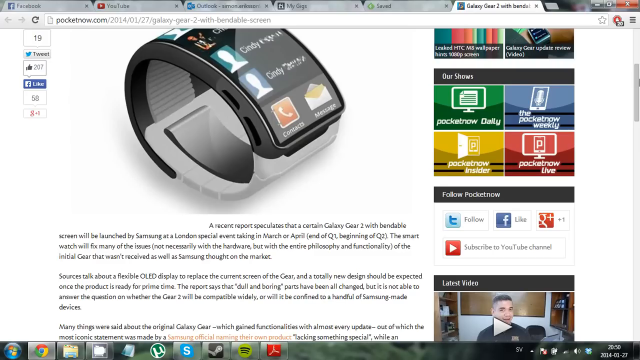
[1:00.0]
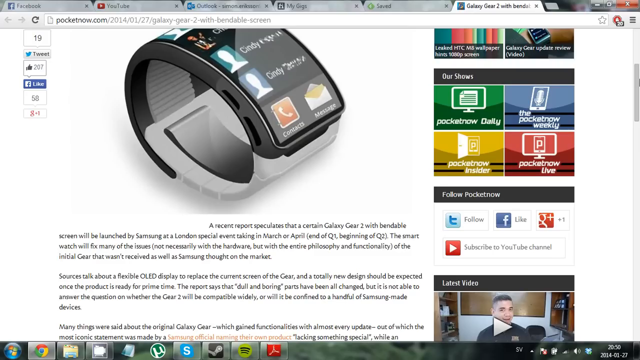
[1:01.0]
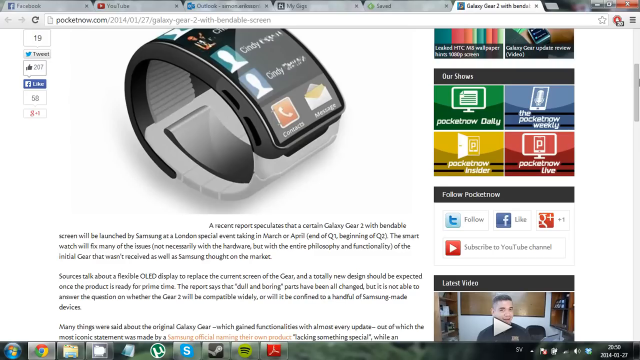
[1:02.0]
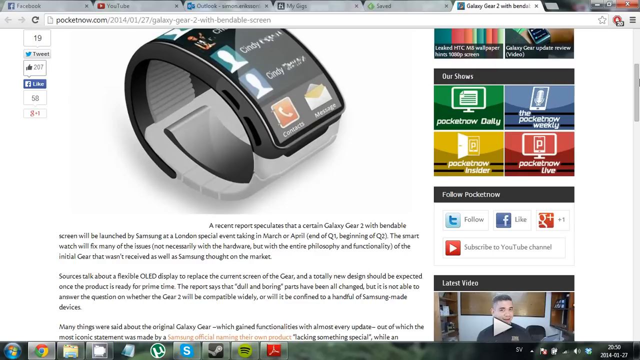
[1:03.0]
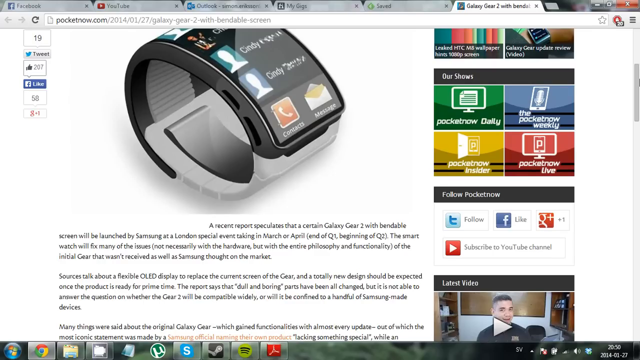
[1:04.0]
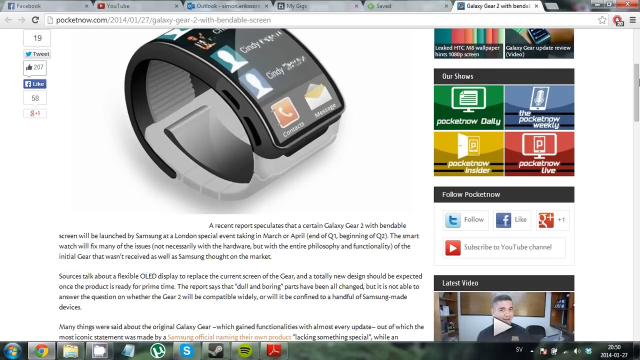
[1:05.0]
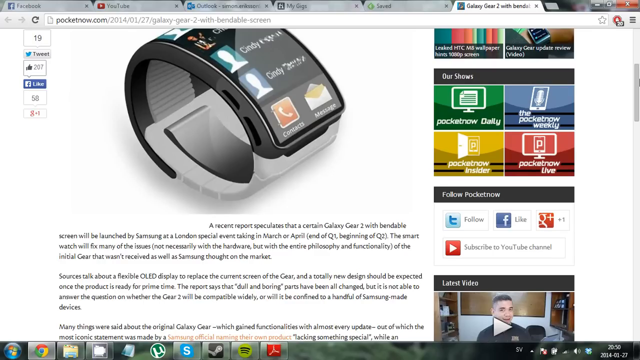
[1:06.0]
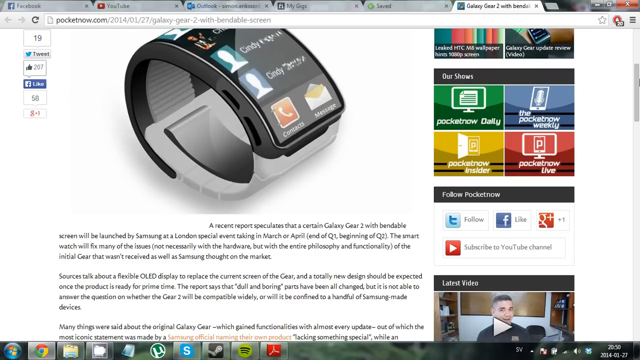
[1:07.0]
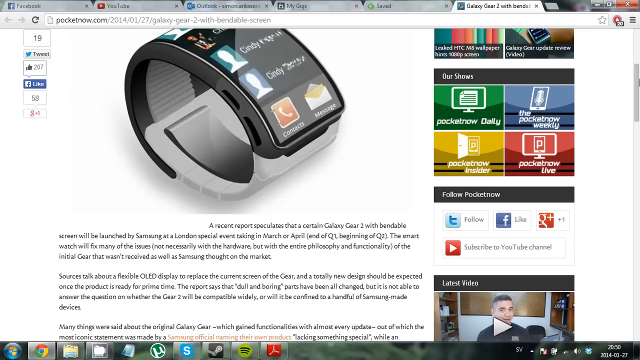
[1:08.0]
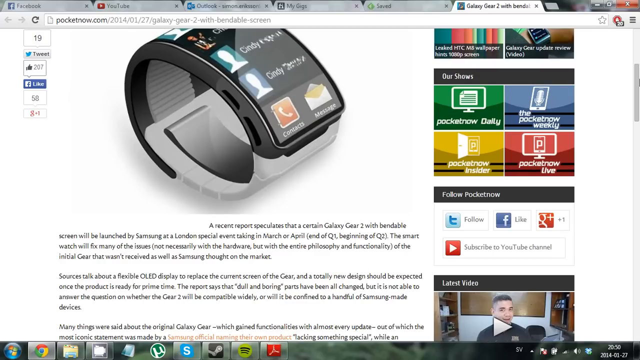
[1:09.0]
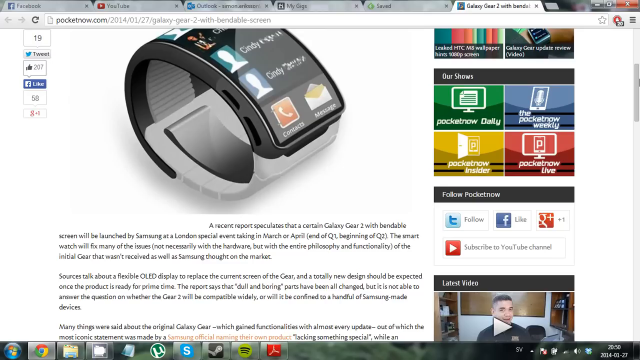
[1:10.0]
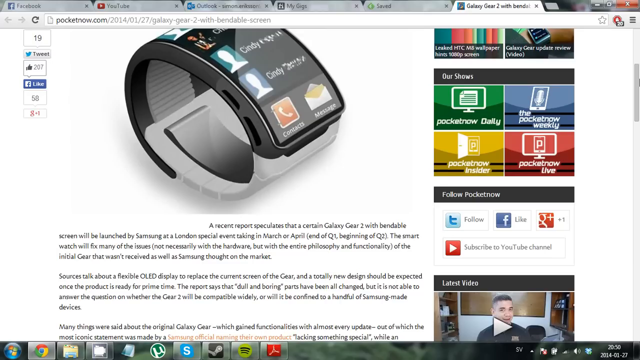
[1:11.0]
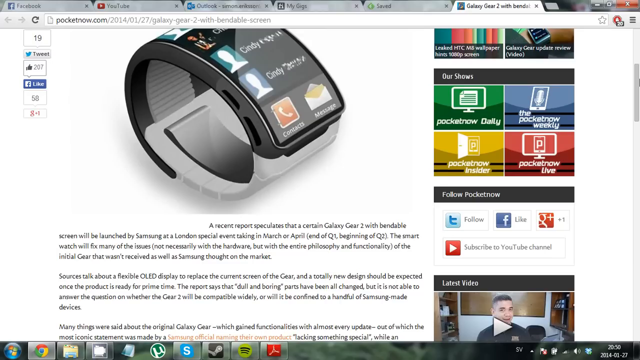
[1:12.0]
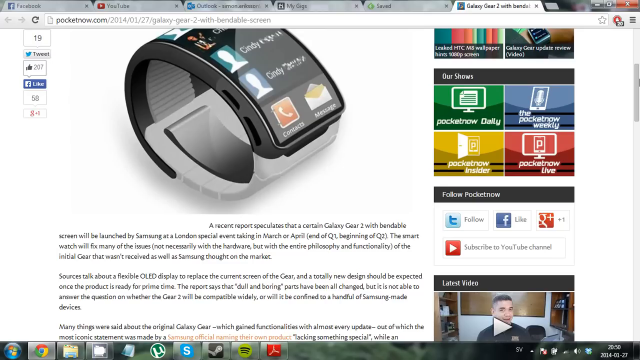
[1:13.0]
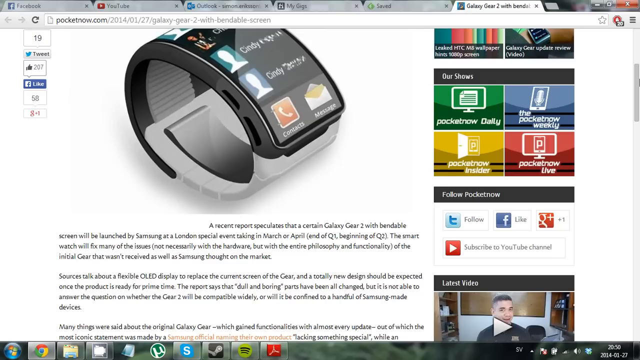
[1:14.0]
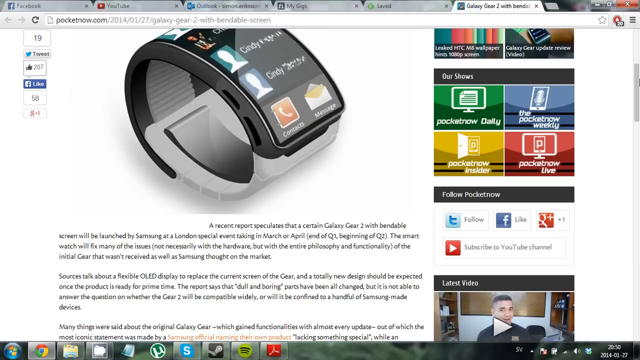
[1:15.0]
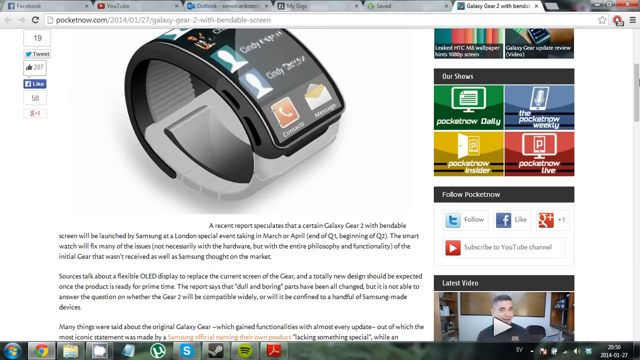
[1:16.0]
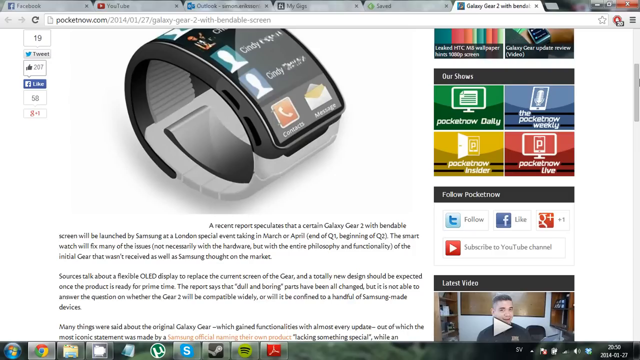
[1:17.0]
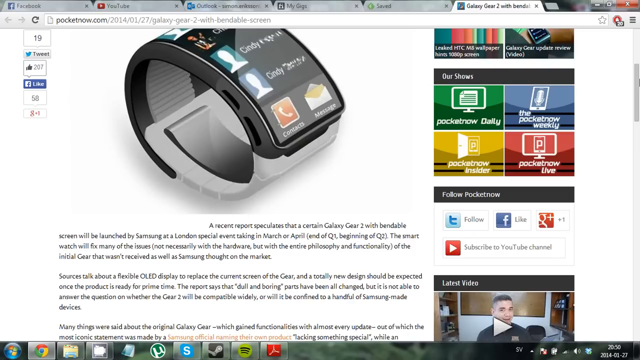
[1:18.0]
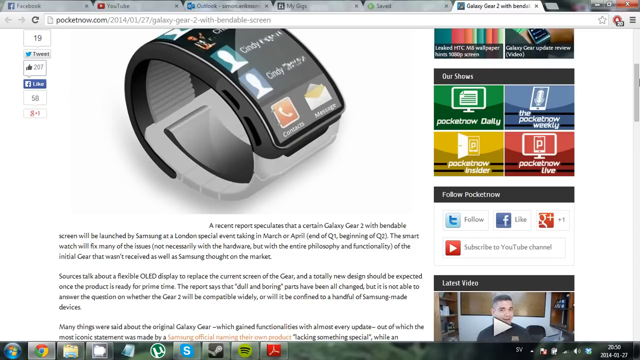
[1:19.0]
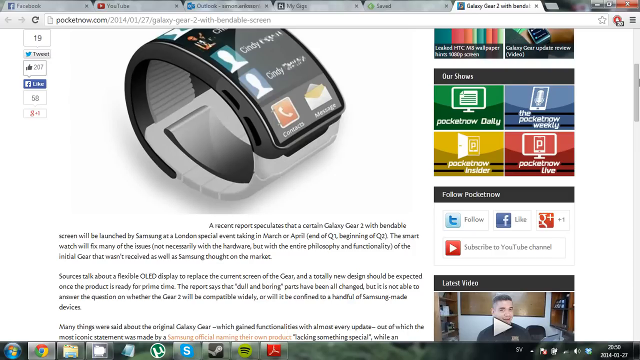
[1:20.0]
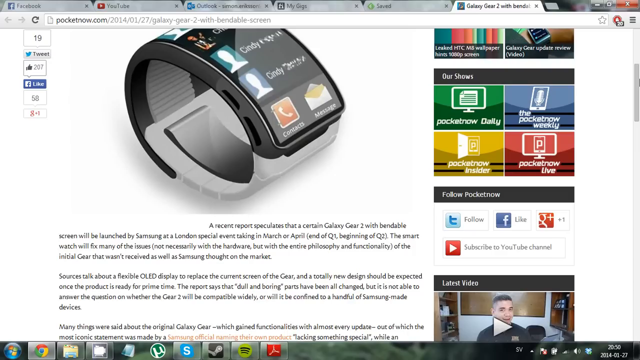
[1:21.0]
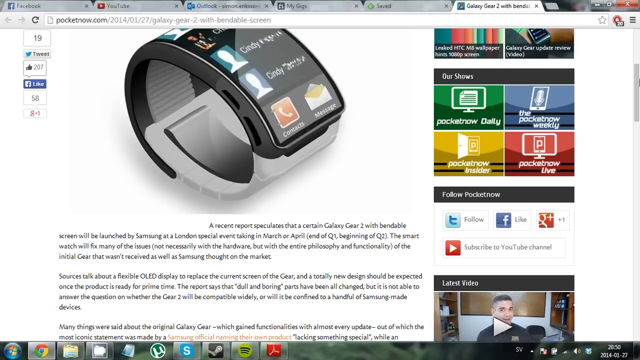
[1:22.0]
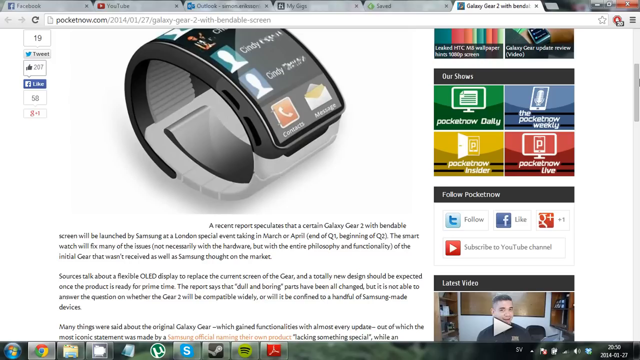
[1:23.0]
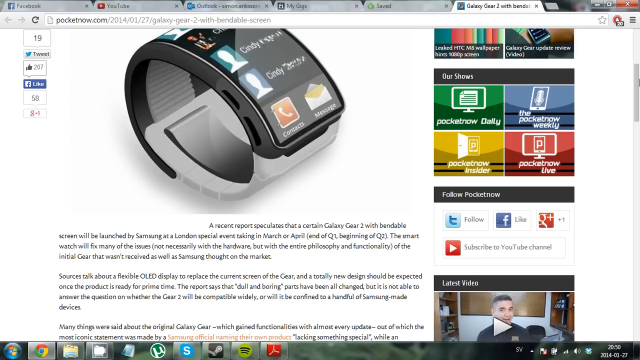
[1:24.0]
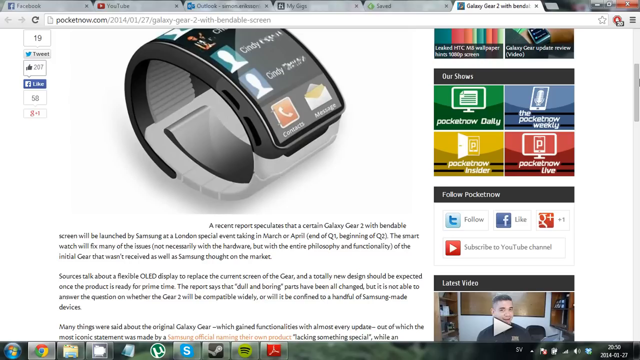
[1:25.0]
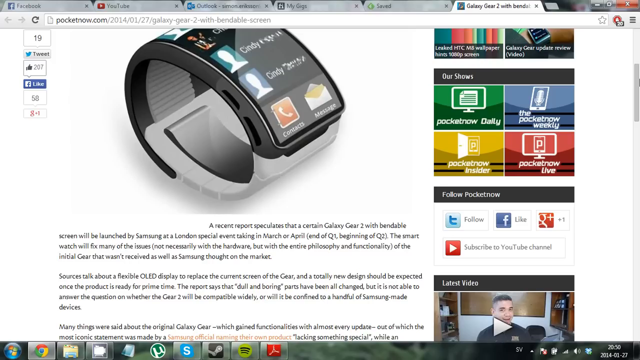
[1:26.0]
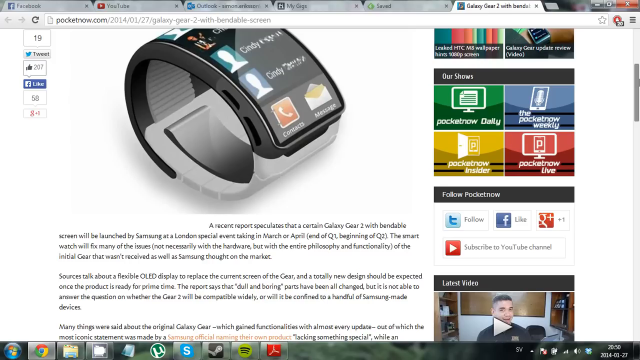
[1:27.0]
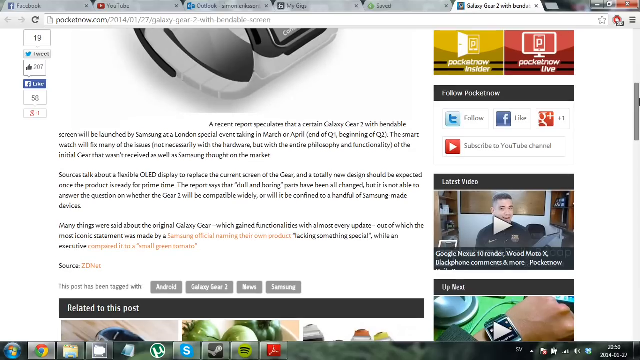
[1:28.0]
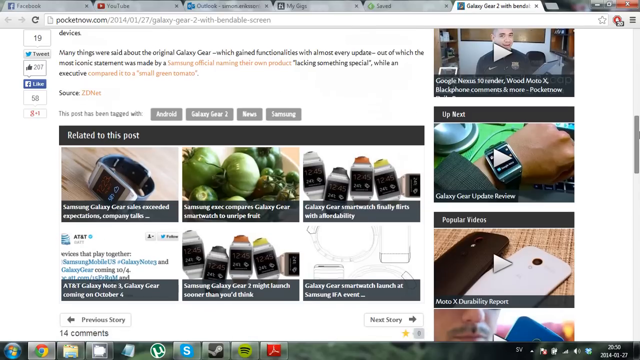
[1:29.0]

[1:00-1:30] Still pictures show the smartwatch, whose band seems to be plastic or rubber or something like that. Toward the end, the person is scrolling down, and some more related products are shown.